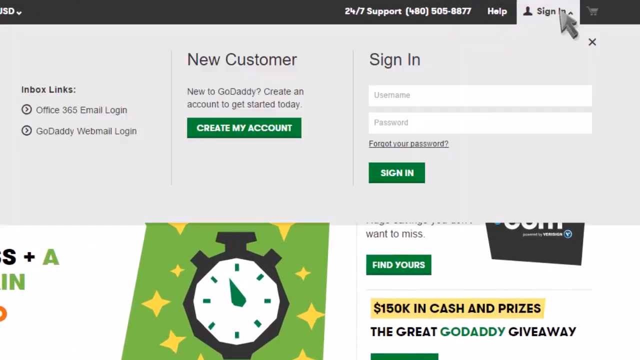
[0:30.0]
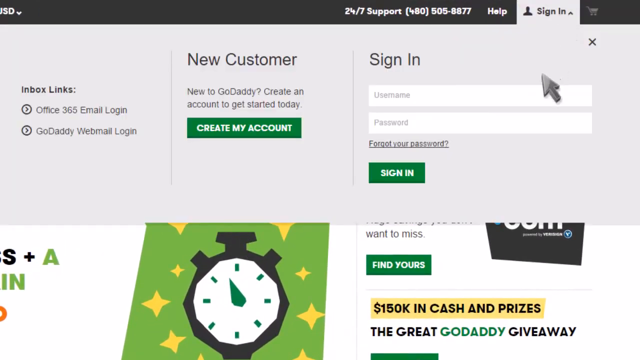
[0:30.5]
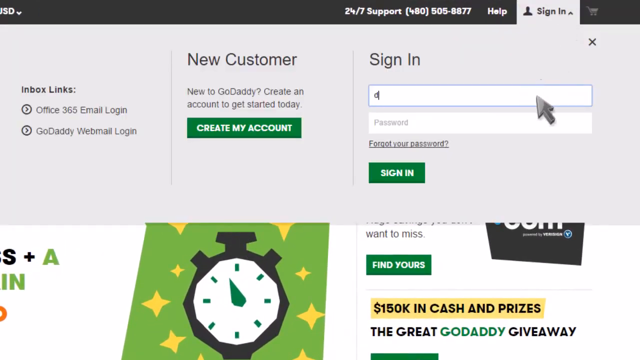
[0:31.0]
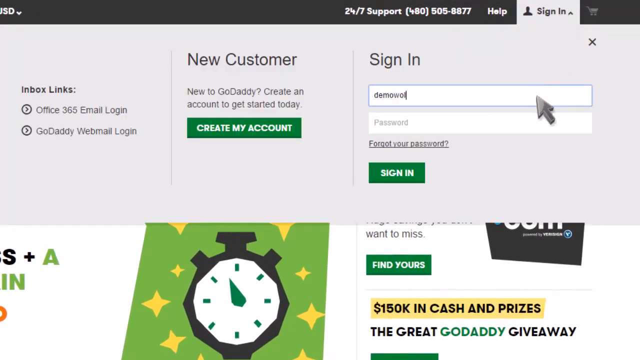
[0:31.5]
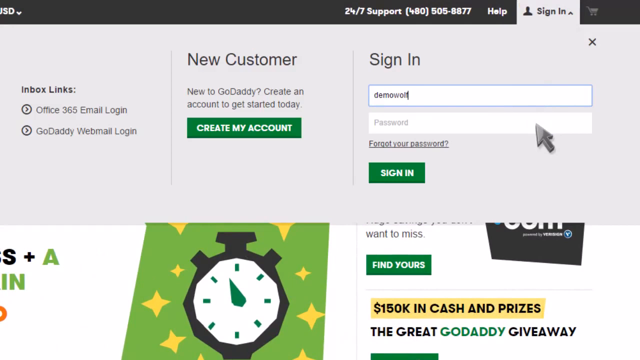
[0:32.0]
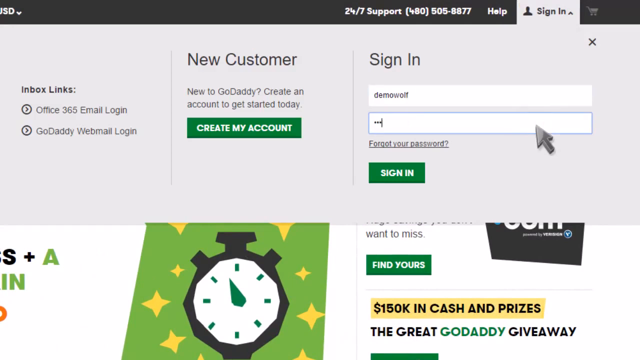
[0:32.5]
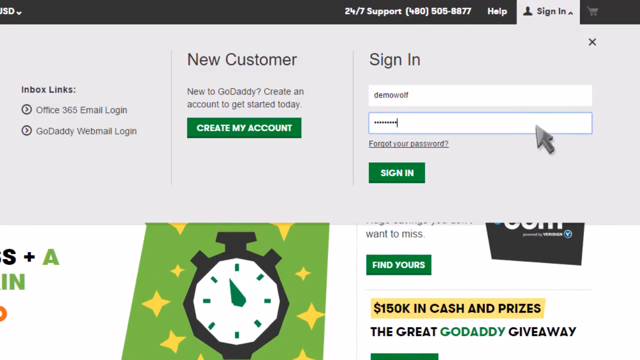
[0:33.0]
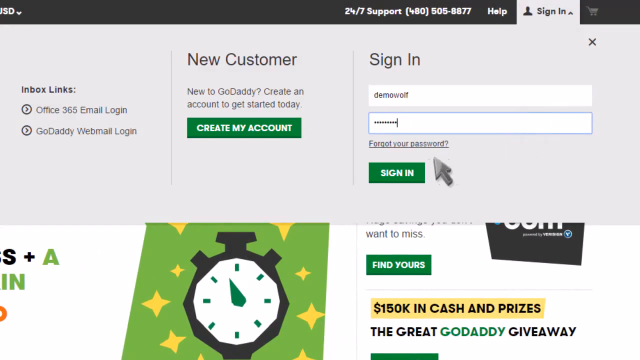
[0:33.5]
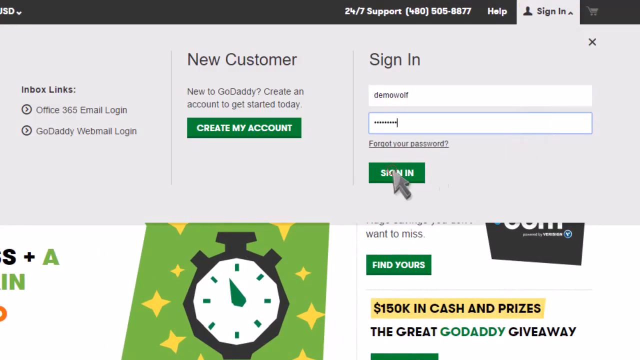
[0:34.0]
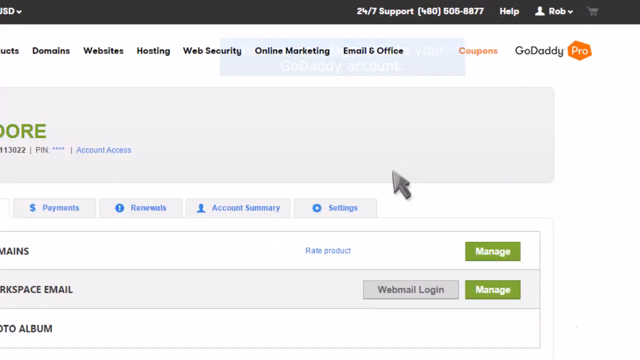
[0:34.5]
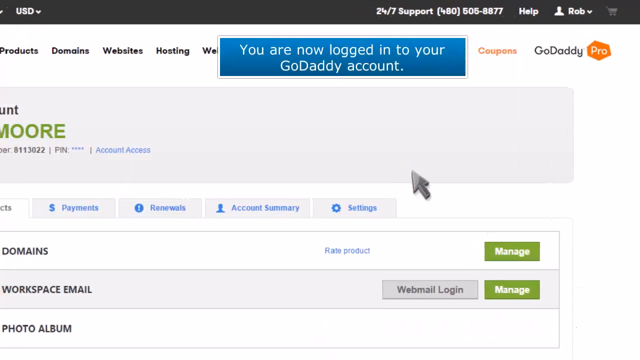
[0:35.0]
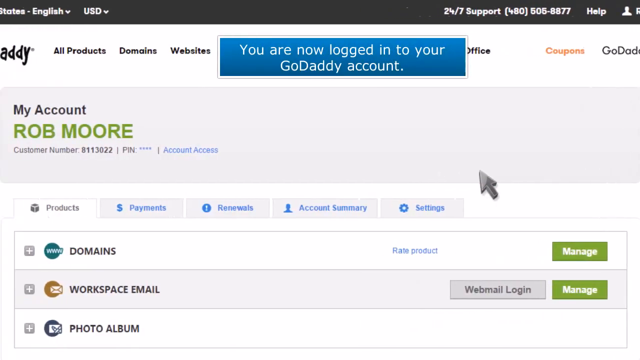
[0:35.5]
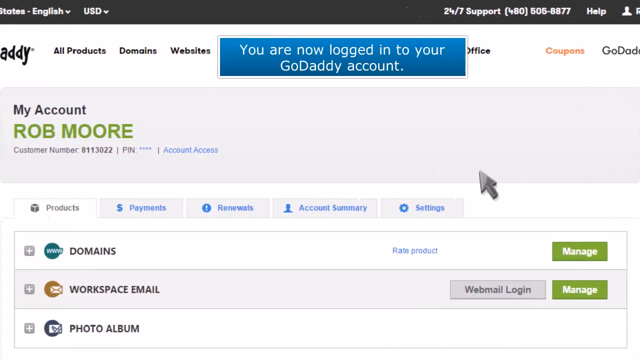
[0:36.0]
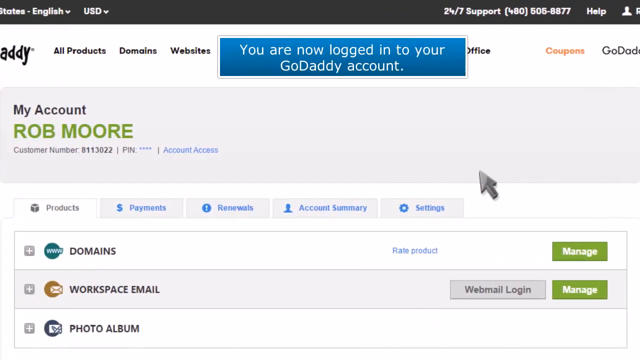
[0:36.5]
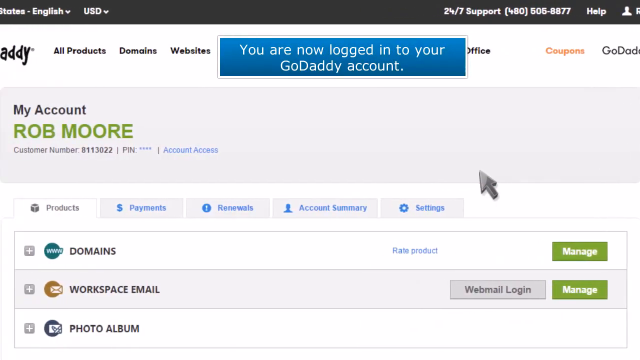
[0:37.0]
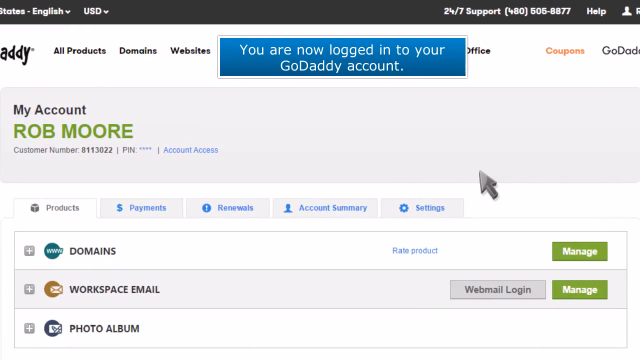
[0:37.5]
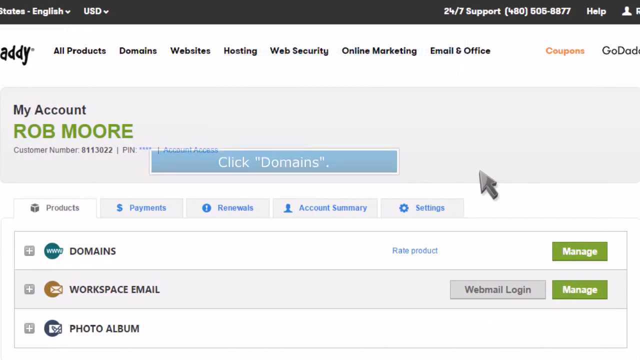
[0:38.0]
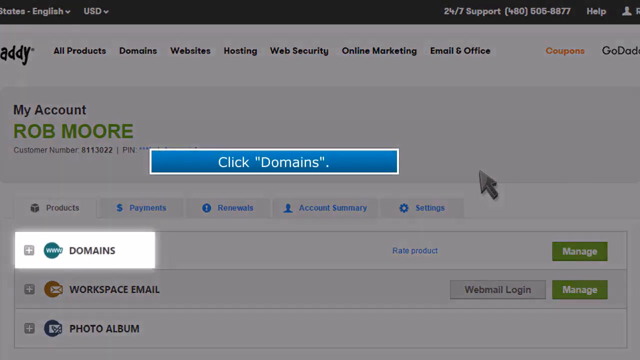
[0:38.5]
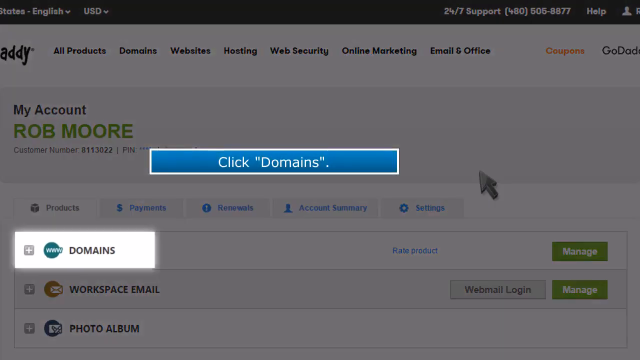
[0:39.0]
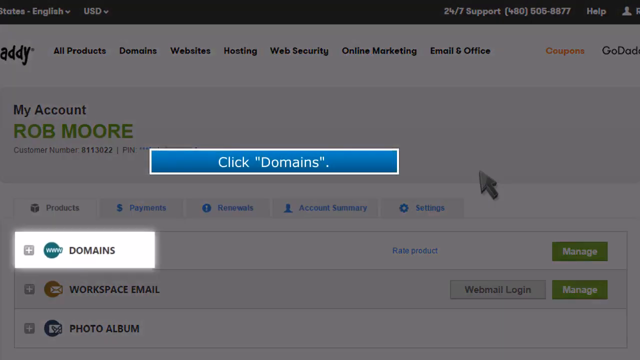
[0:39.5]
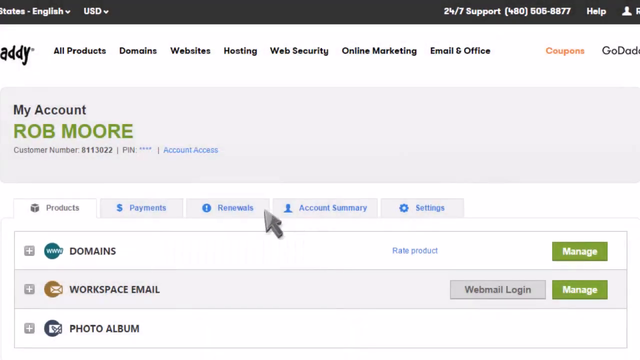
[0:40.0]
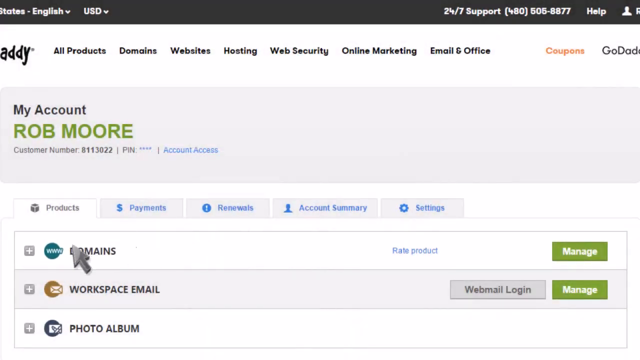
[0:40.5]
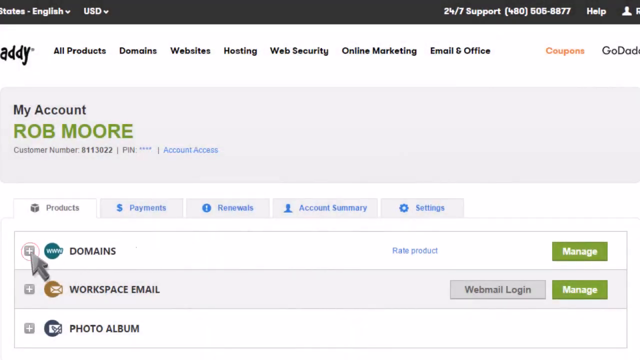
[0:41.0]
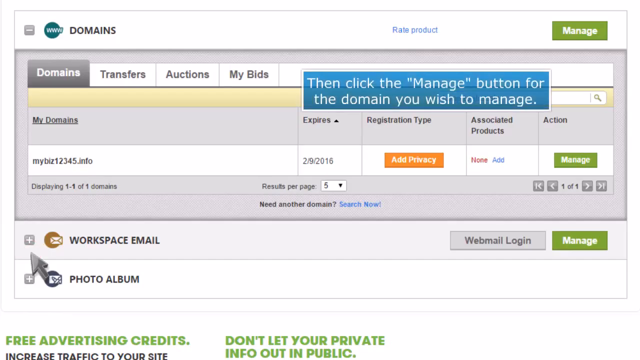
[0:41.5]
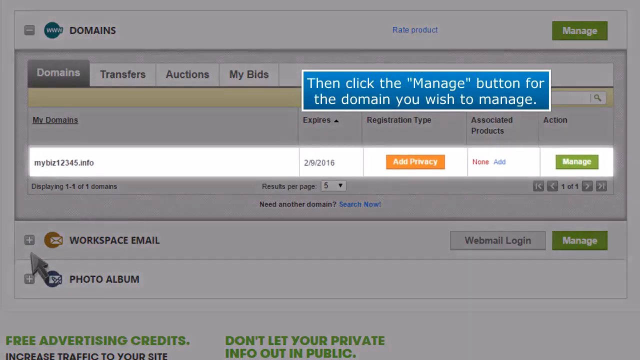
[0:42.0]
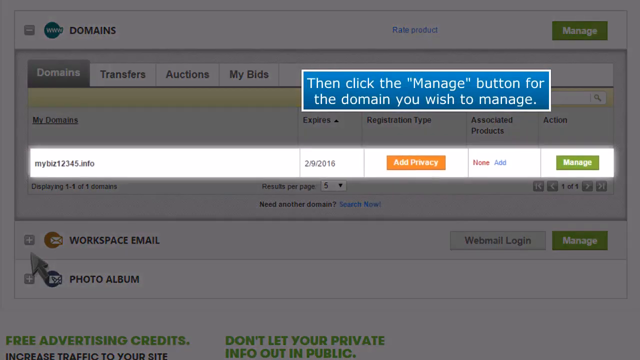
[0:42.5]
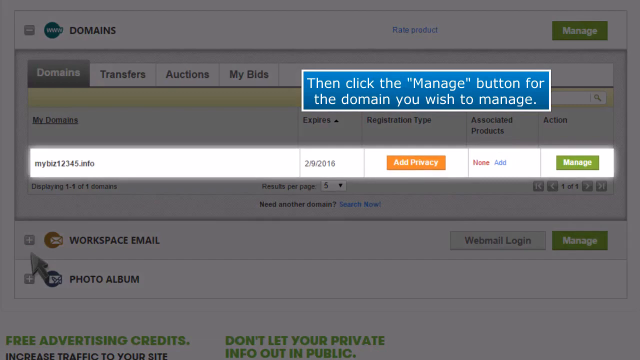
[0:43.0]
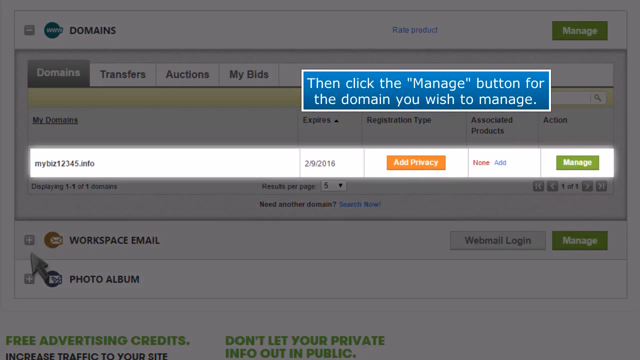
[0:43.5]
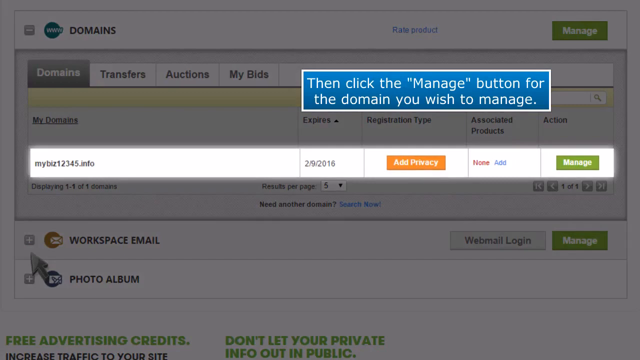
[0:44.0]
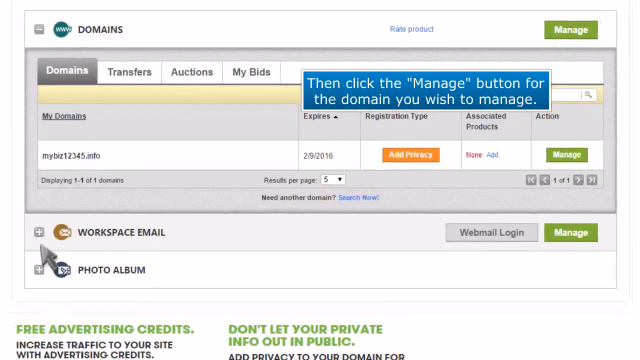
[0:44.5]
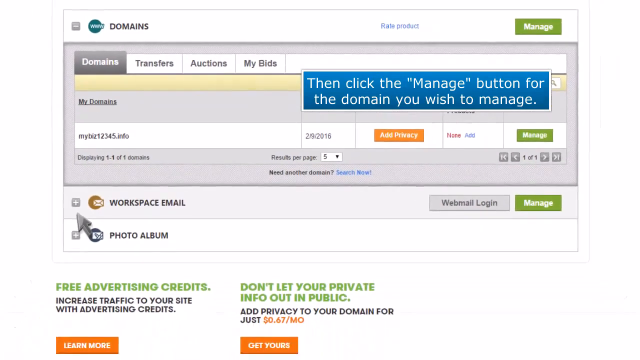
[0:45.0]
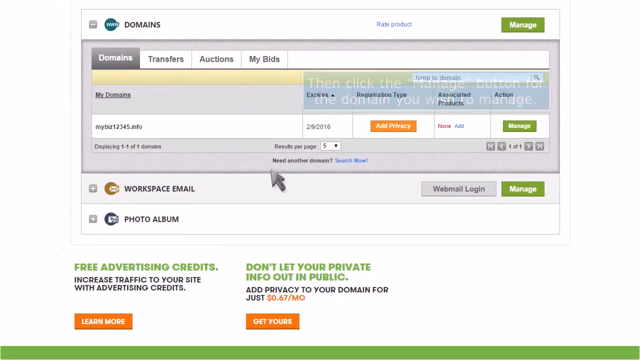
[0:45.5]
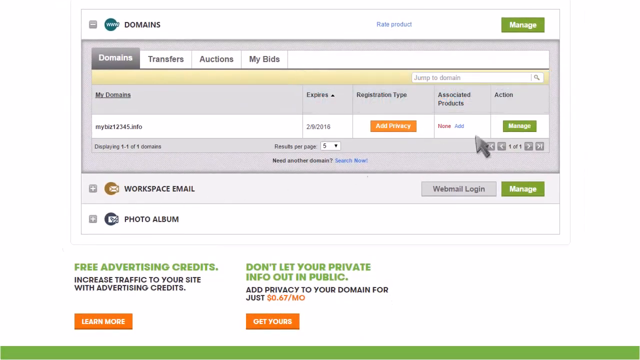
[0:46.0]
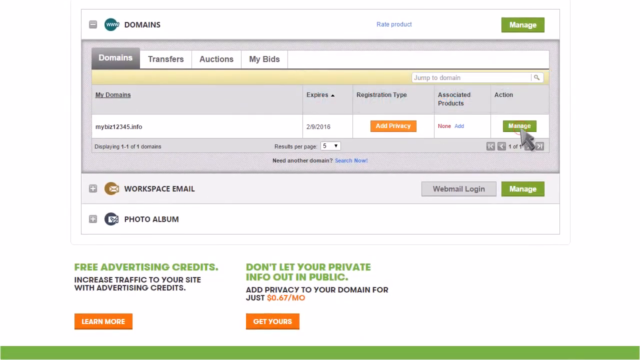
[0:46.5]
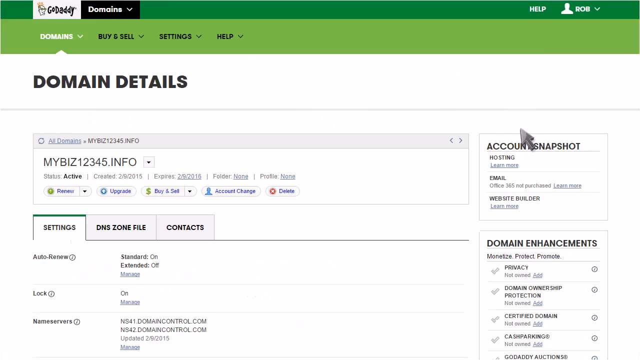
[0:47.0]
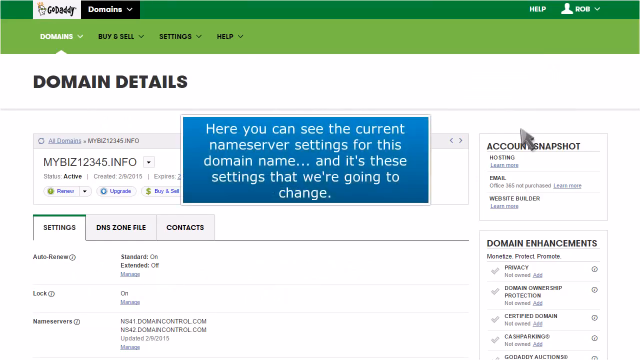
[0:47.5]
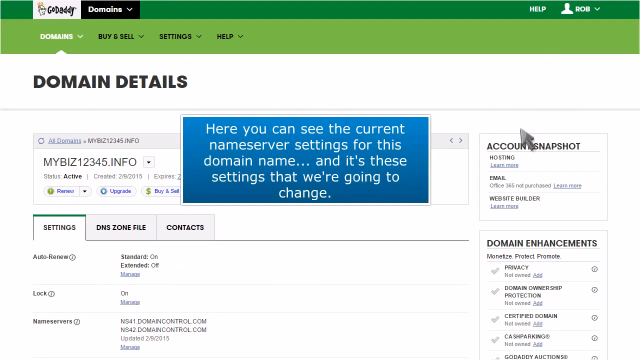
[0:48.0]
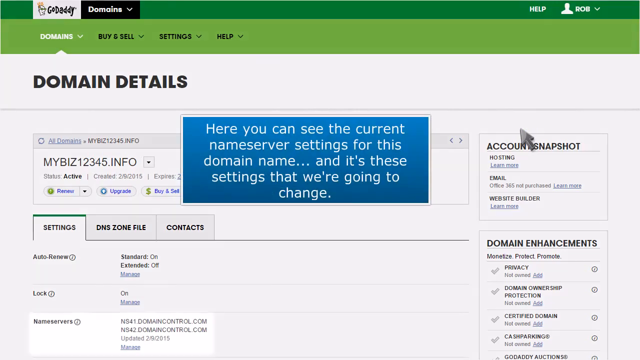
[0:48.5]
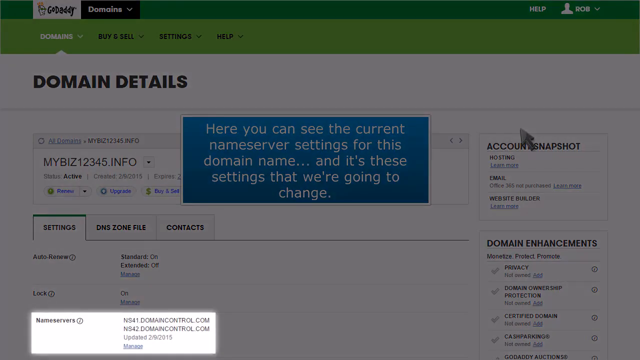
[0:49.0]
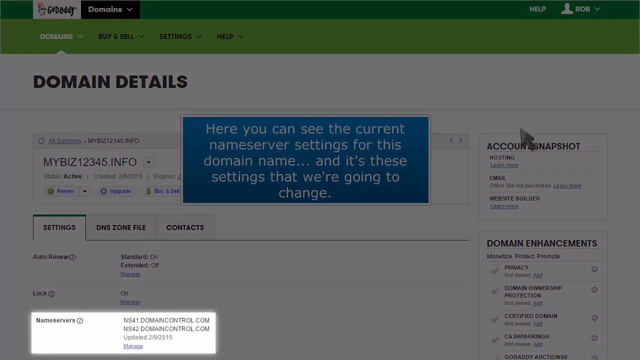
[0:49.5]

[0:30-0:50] After logging into the account, the domains section is opened and the manage button is clicked for the domain to be managed. The details open with an instruction, and the current name server settings for the chosen domain are shown; these are the settings to be changed.